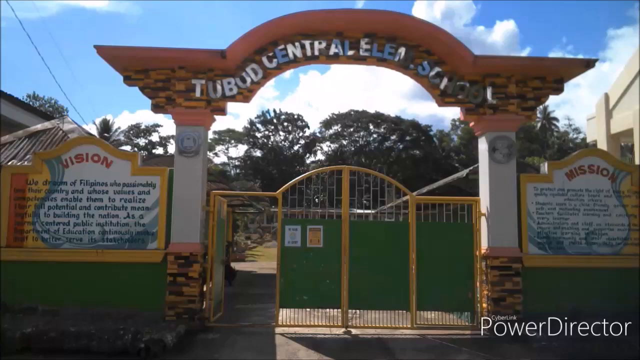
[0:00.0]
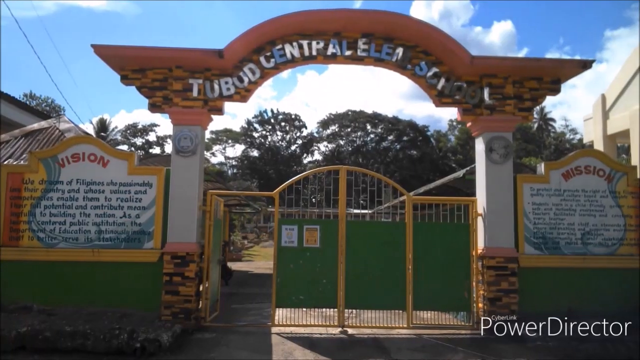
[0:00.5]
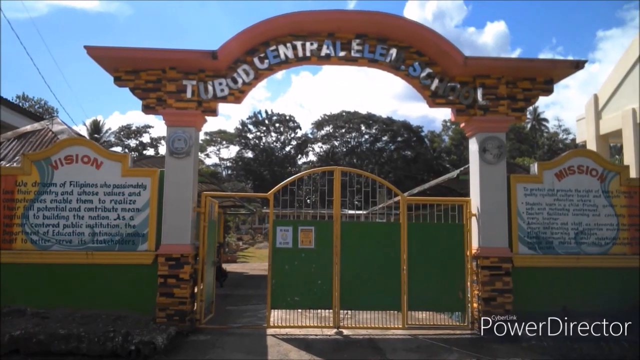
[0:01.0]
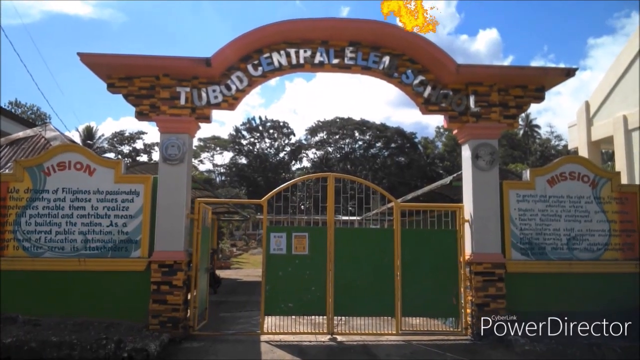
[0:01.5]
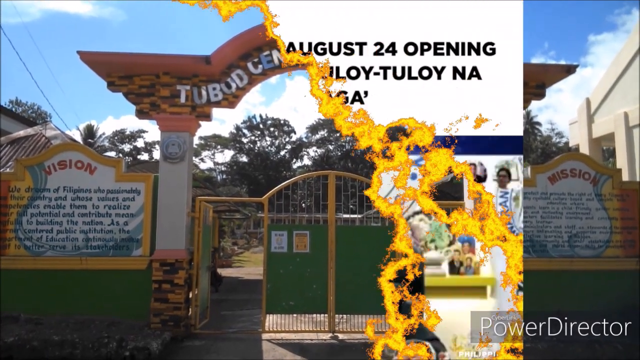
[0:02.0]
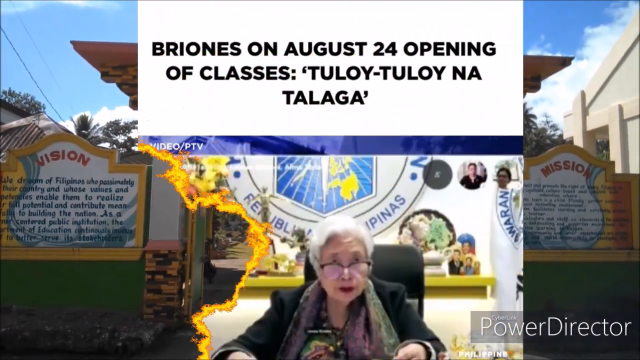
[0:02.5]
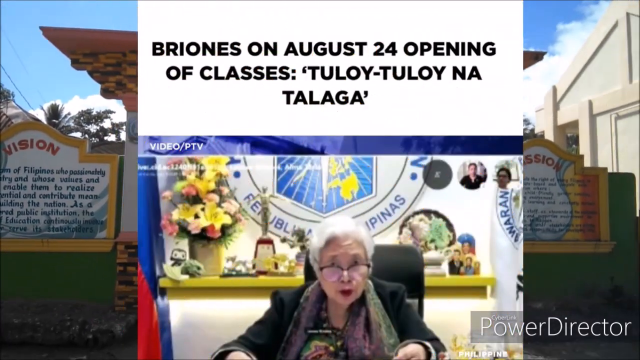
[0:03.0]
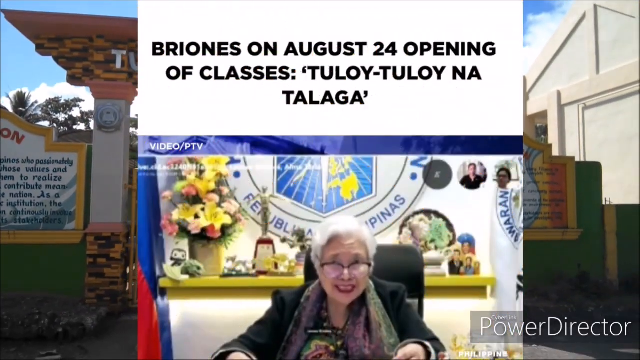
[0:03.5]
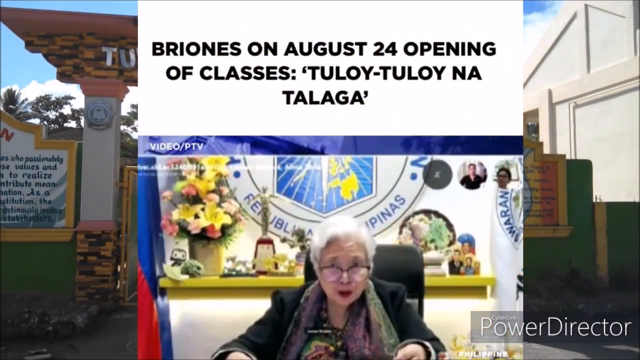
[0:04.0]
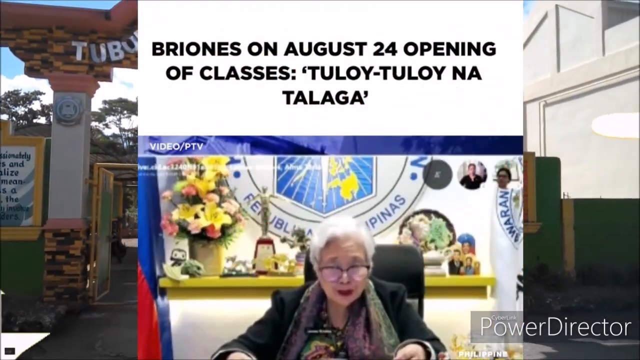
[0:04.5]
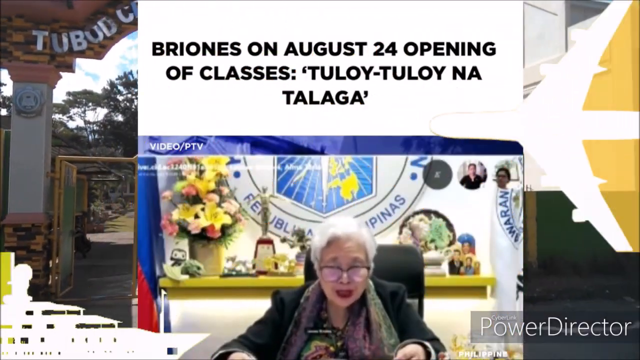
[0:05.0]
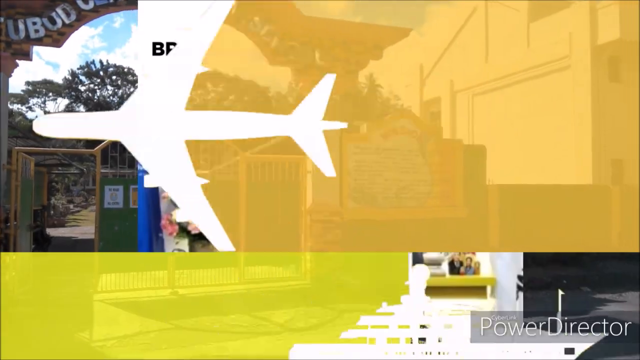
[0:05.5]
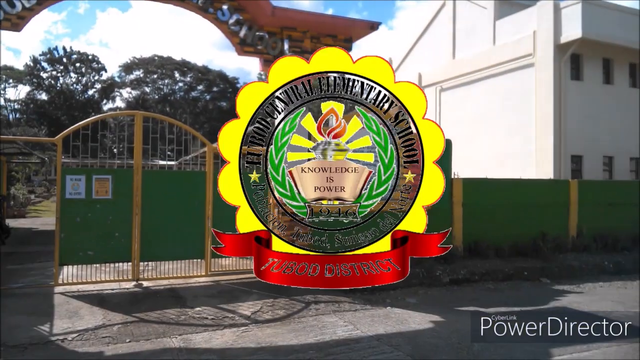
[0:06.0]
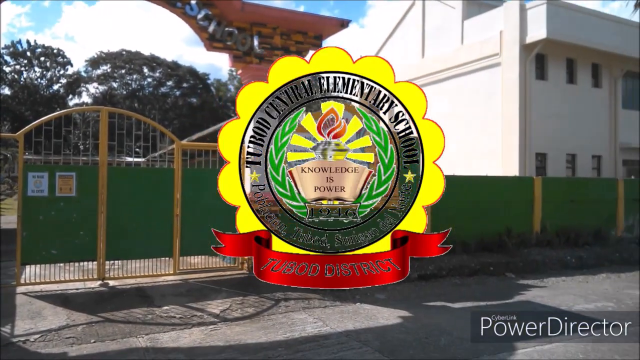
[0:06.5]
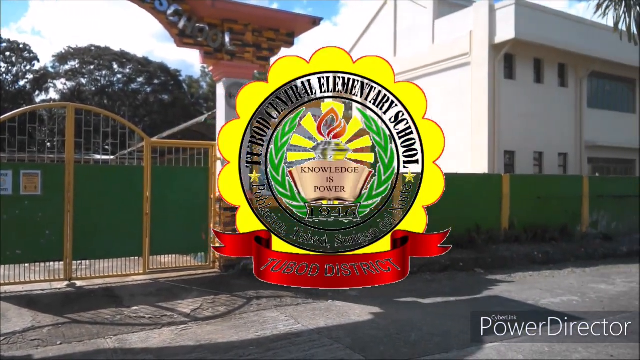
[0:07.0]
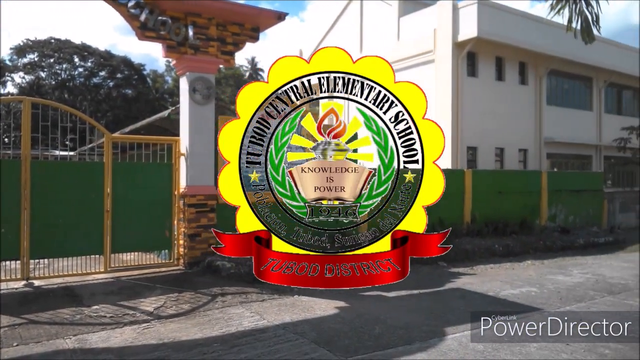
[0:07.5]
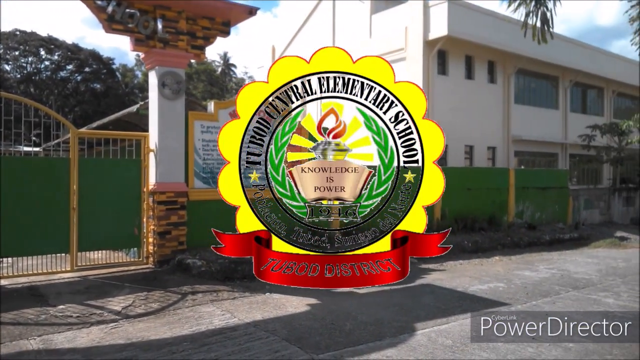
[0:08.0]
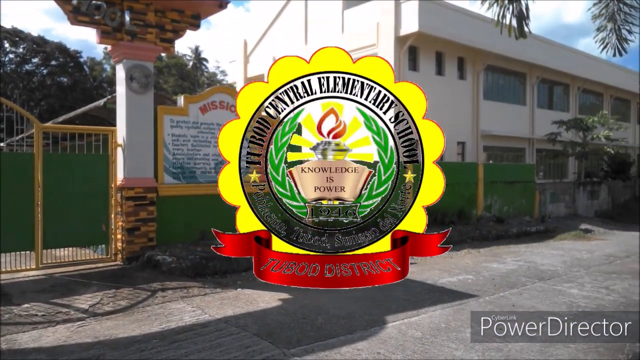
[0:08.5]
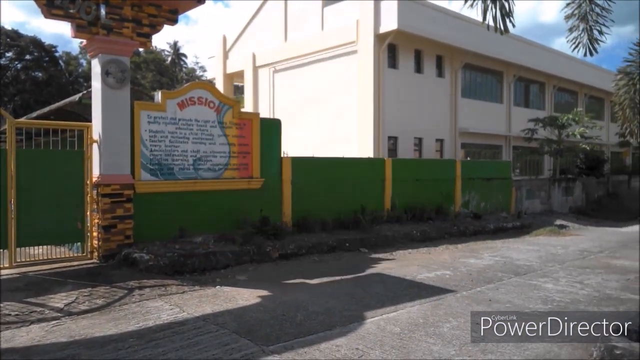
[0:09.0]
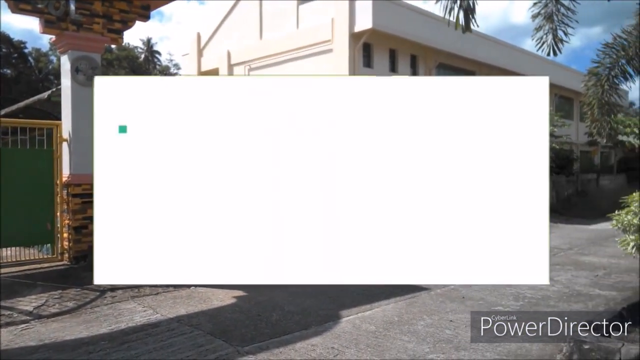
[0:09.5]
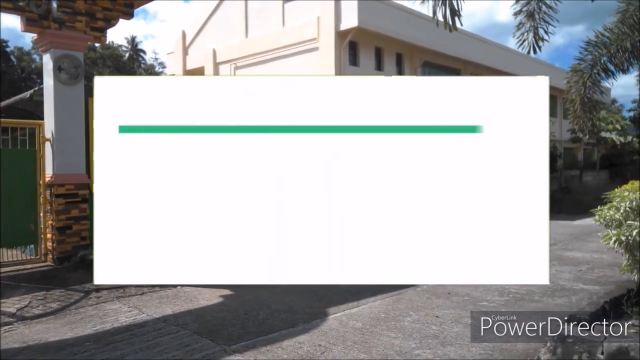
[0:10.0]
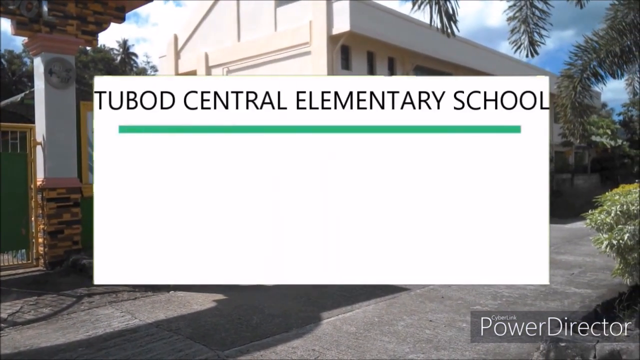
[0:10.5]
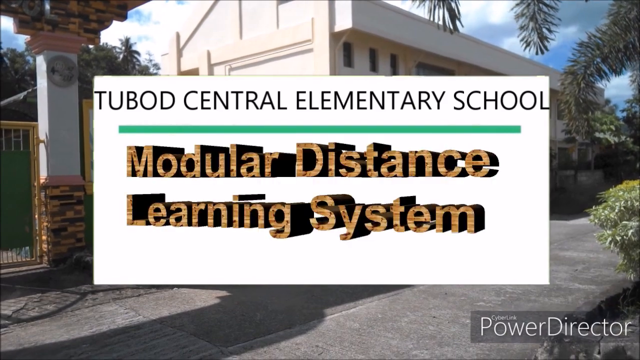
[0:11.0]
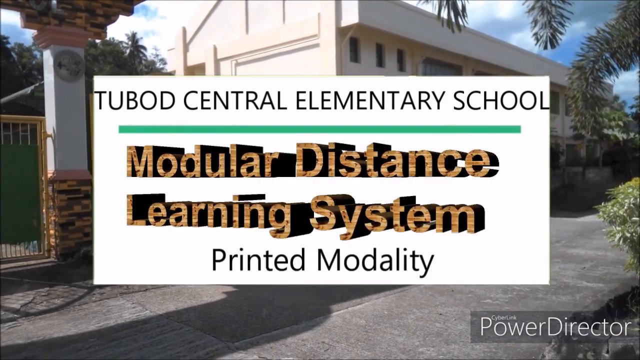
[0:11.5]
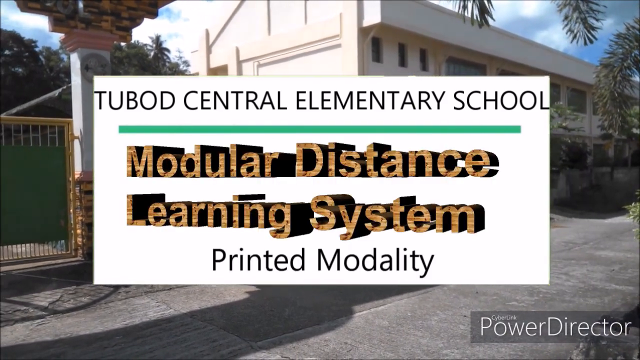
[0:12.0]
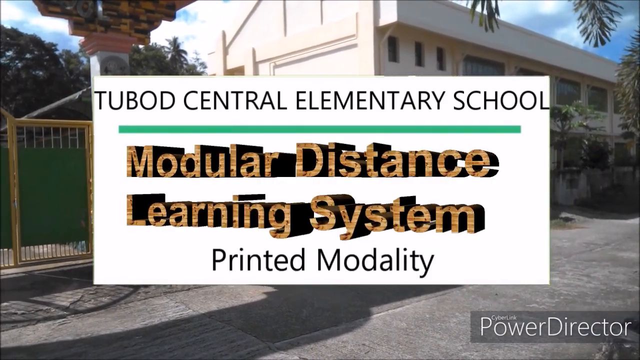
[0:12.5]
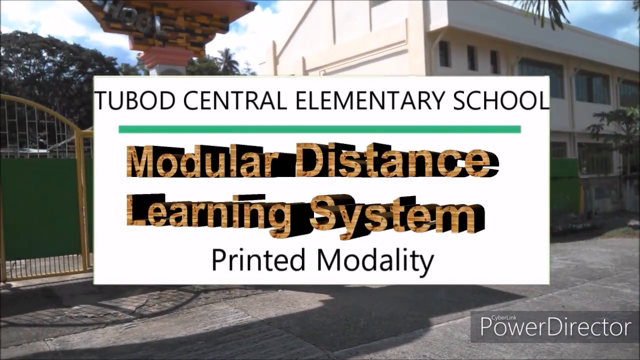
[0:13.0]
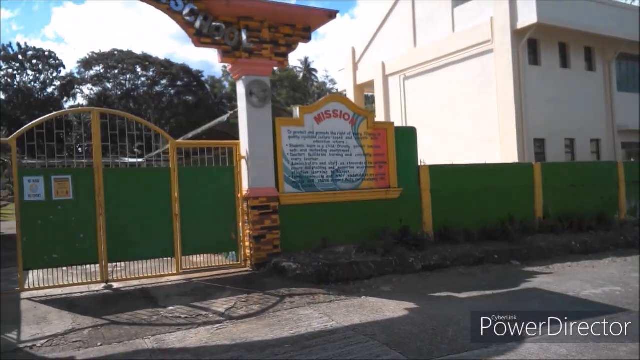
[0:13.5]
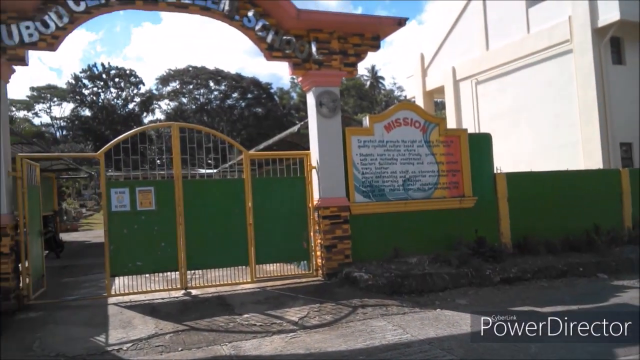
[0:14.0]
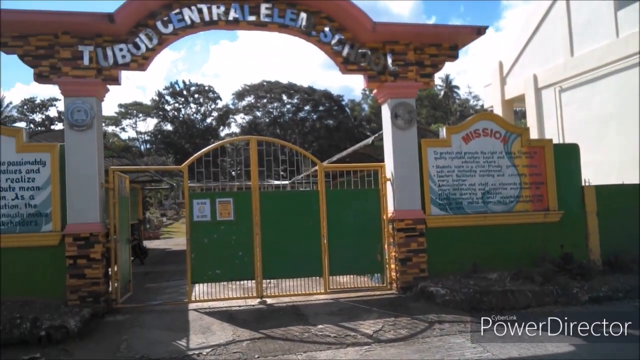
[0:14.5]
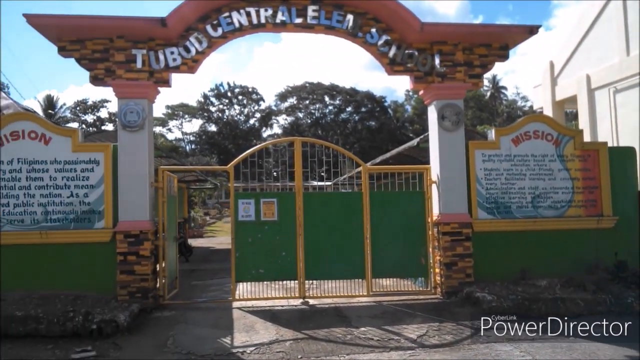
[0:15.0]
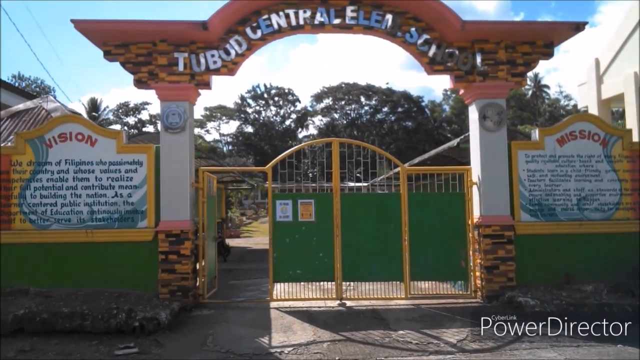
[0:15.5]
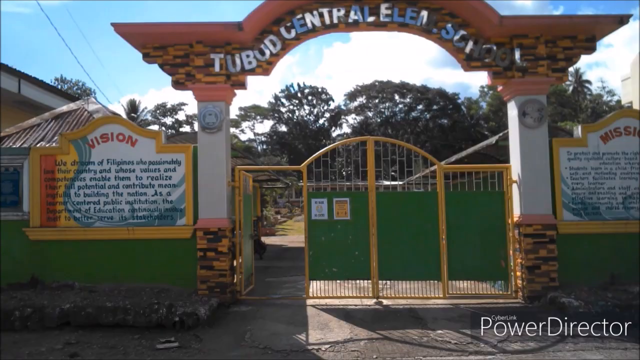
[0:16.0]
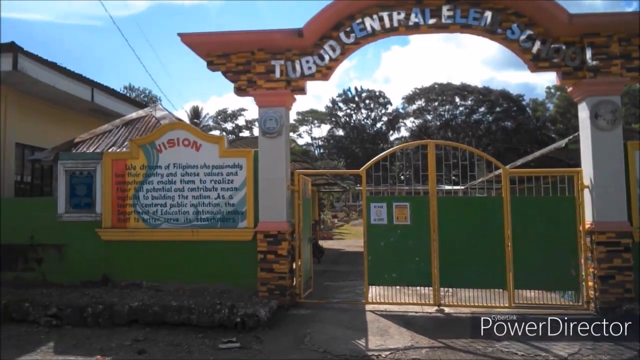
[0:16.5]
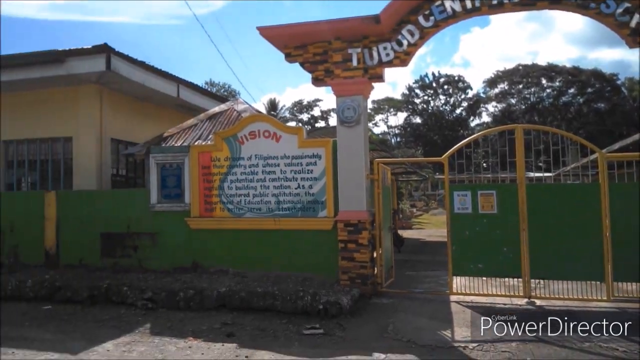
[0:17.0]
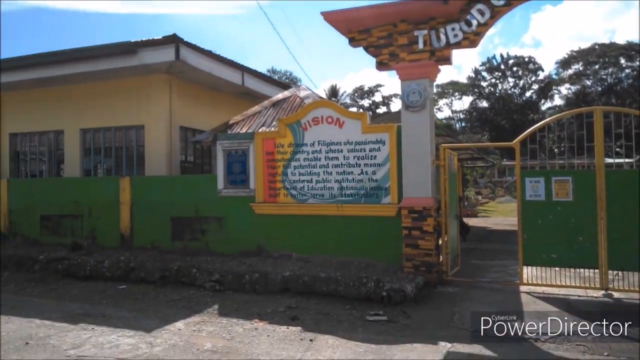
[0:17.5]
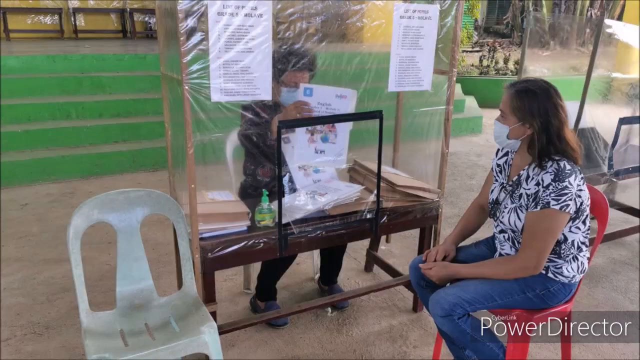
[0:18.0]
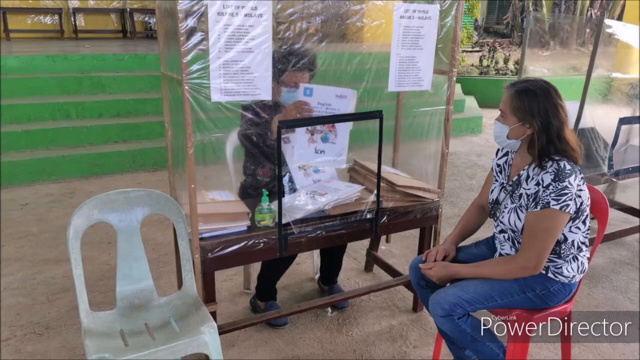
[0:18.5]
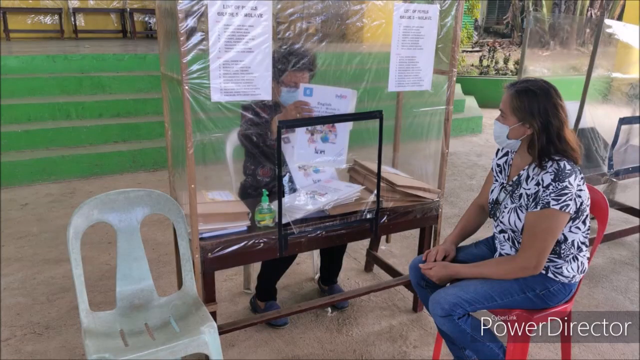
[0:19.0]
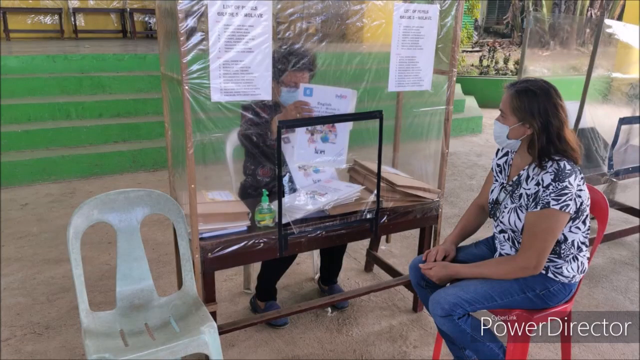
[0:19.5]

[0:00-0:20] The colorful gate of a school appears, and then an overlay comes up in the middle of the screen with text mentioning August 24, "Opening of Classes" and "Tuloy Tuloy". An elderly lady with glasses is shown speaking in front of a sign that says "Republic of the Philippines". A picture of an airplane zooms by, and a seal is shown, probably the school's seal, with "Knowledge is Power" in the center. It has a yellow flower shape on the outline and a circular seal in the middle, with a flame over a book, possibly a lamp with sunbeams or light beams coming out of it. "Tabad District" is written at the bottom on a red ribbon. Another overlay then reads "Tabad Central Elementary School, Modular Distance Learning System, Printed Modality". The picture of the gate is shown again; the gate has lots of yellows, reds and greens, the mission statement is on the sides, and there is an awning over the gate that reads "Tabad Central Elementary School". The camera moves back and forth to show the gate and the fence surrounding the school, and the picture of the gate is shown again.